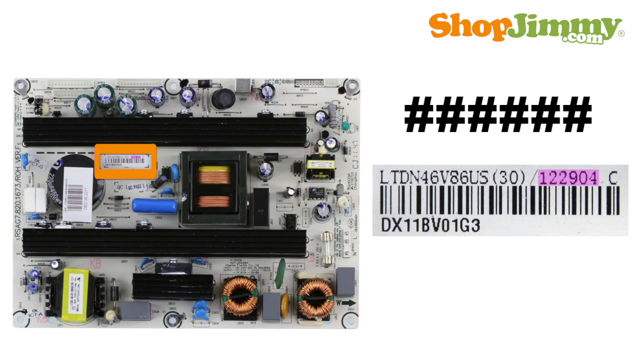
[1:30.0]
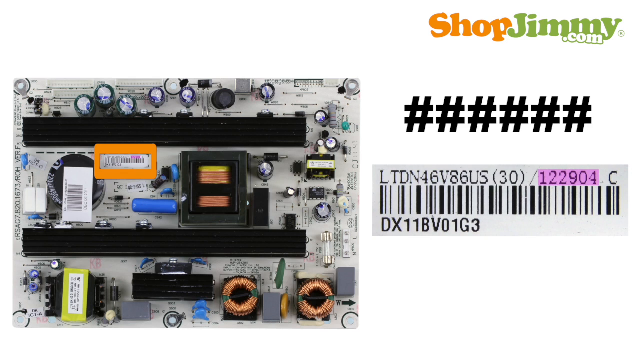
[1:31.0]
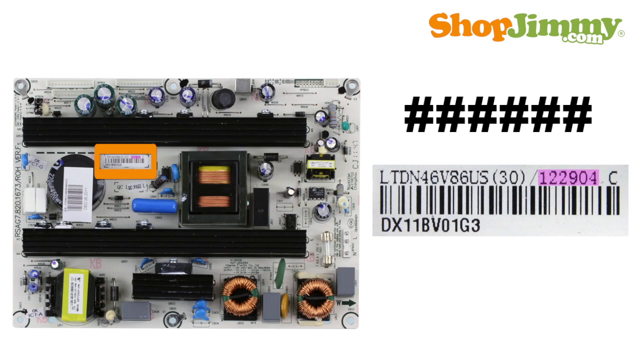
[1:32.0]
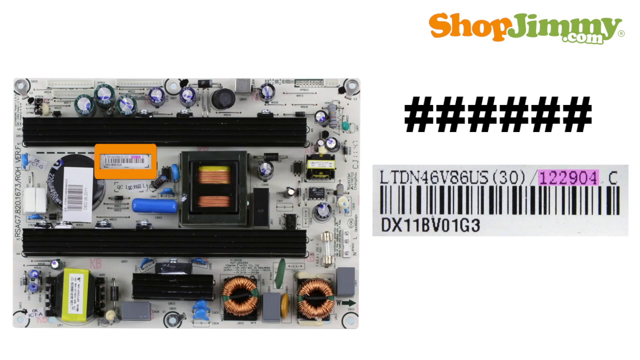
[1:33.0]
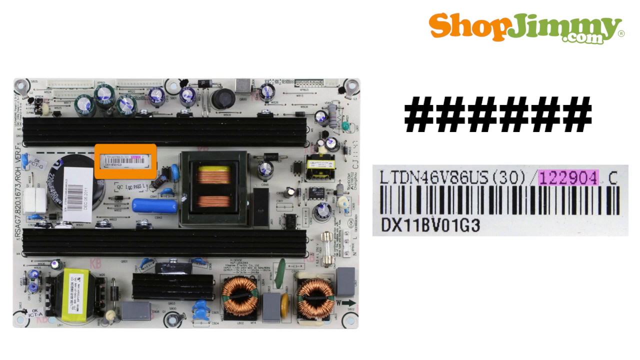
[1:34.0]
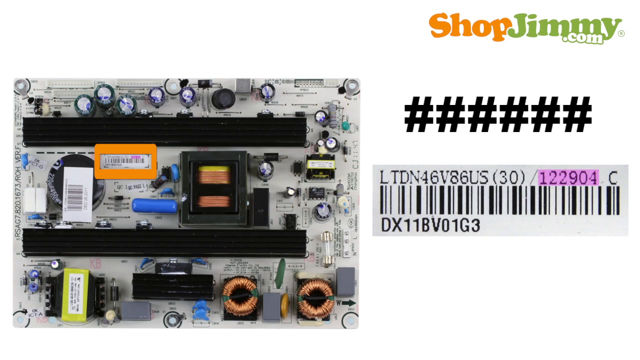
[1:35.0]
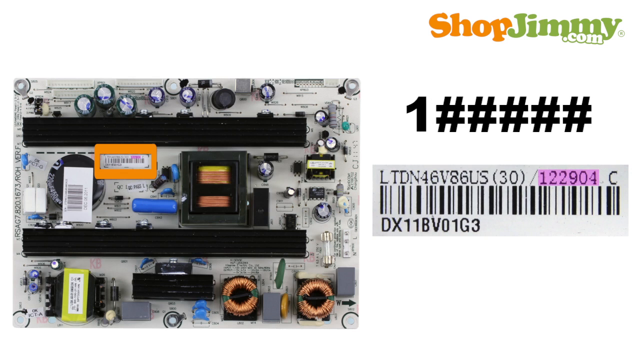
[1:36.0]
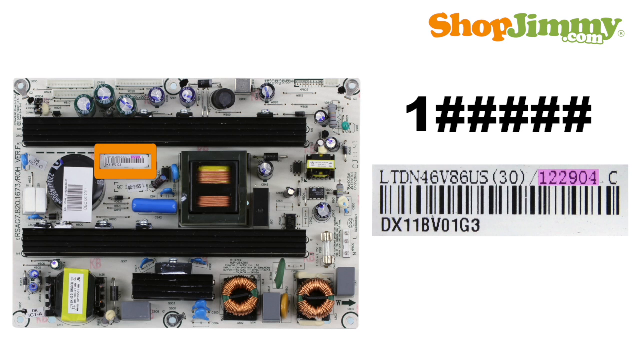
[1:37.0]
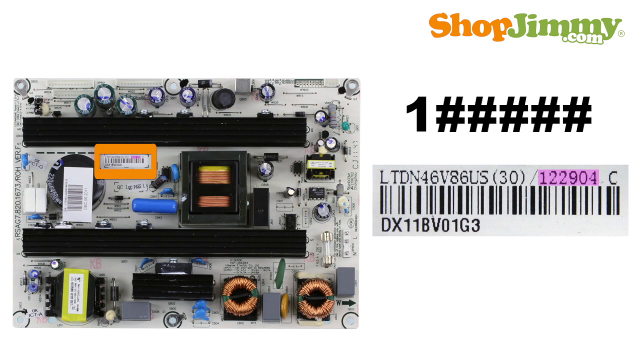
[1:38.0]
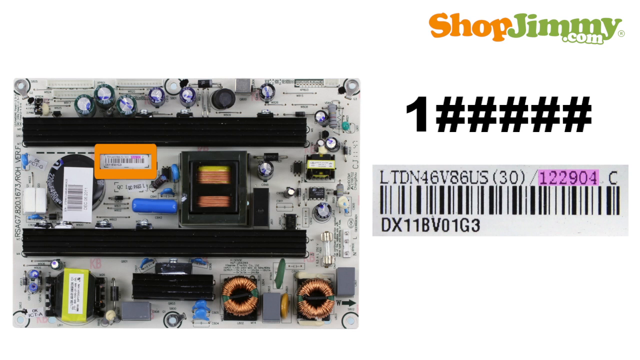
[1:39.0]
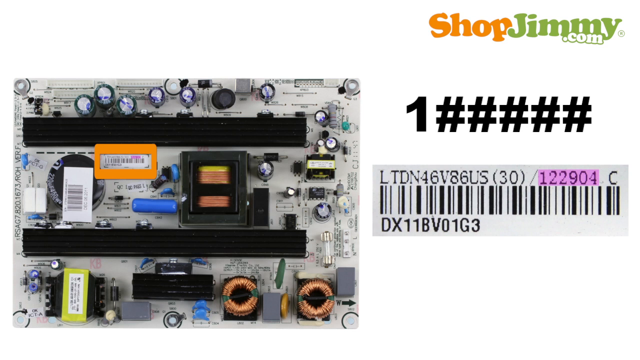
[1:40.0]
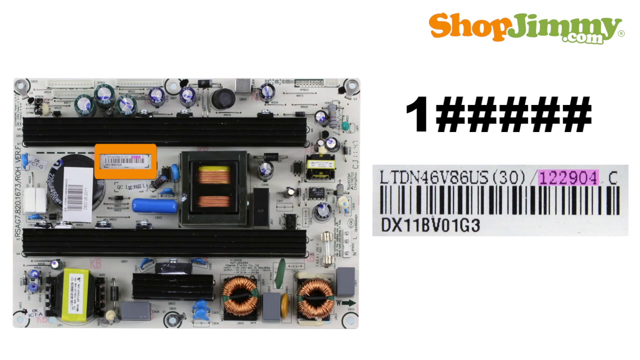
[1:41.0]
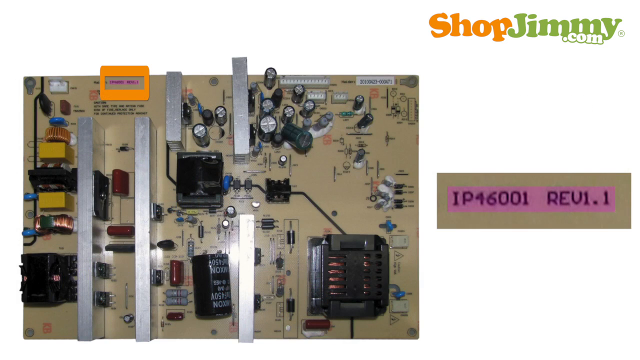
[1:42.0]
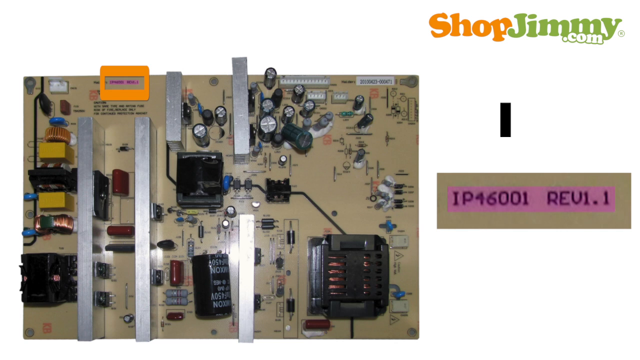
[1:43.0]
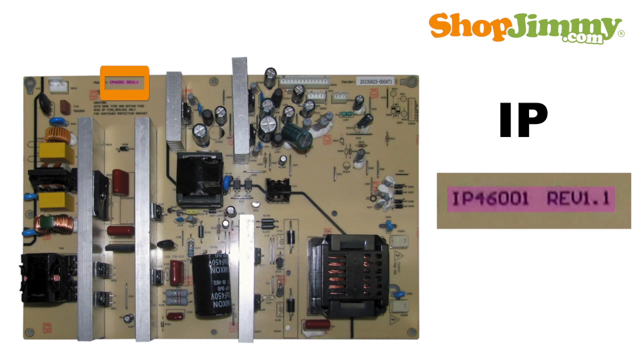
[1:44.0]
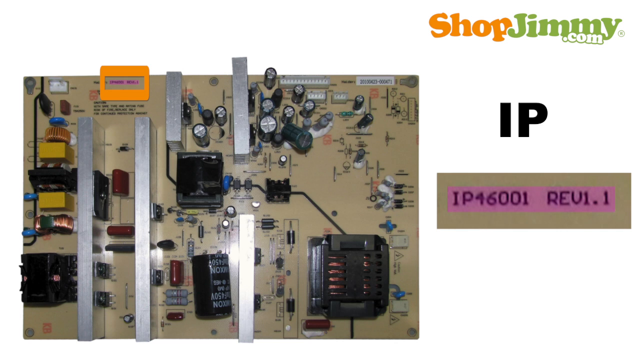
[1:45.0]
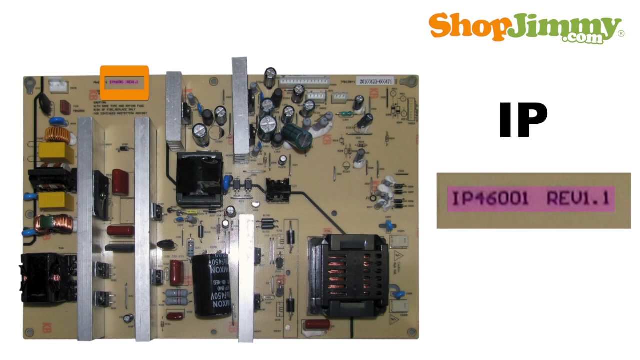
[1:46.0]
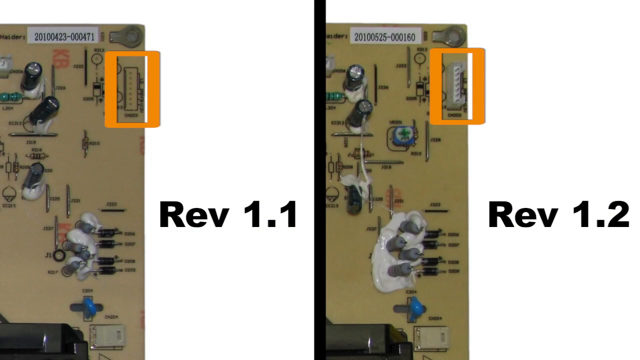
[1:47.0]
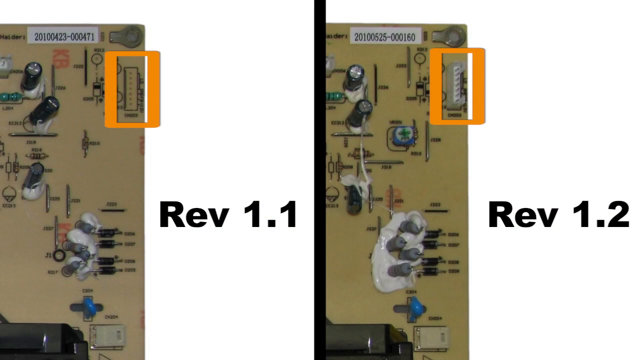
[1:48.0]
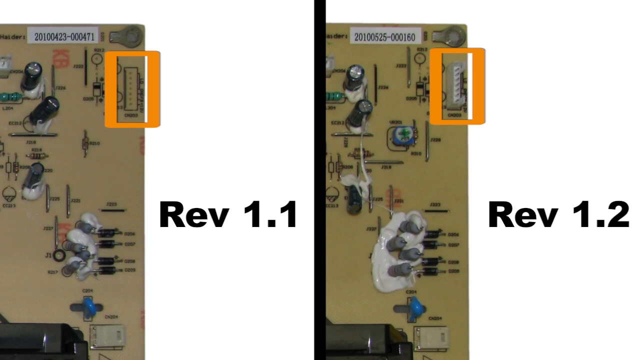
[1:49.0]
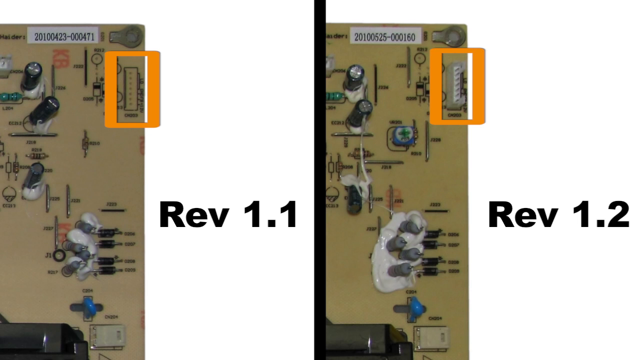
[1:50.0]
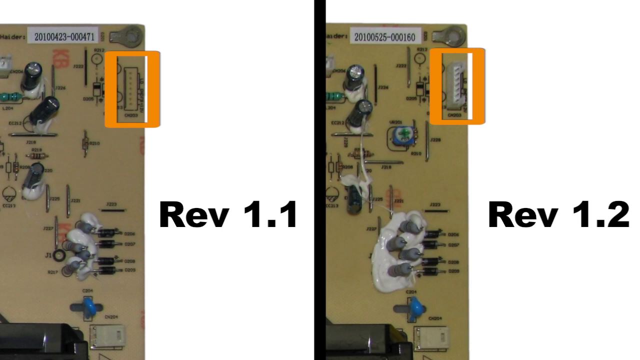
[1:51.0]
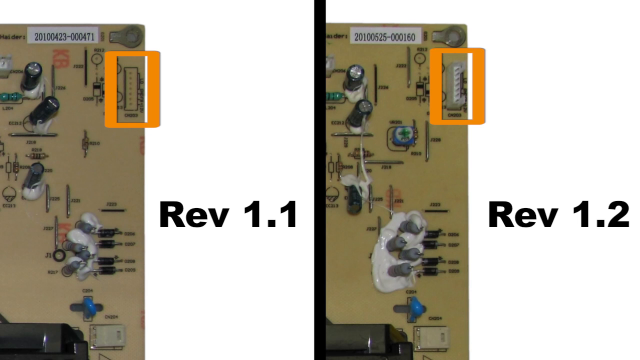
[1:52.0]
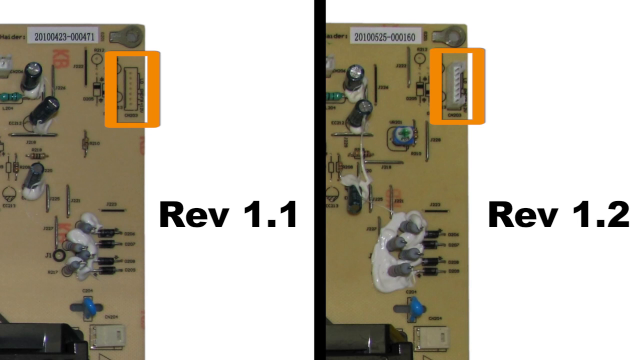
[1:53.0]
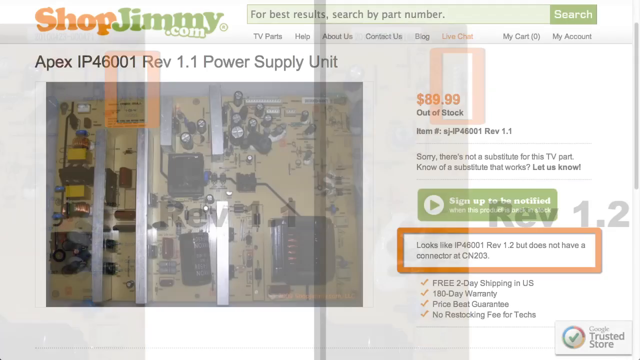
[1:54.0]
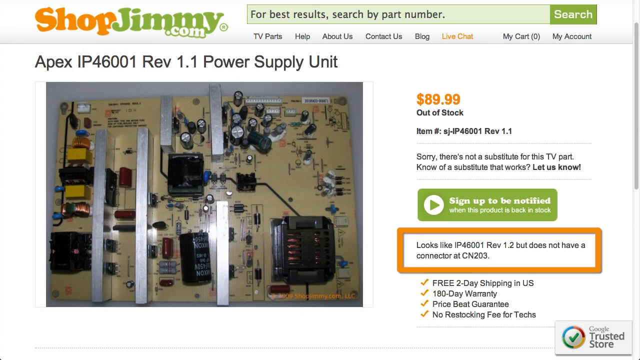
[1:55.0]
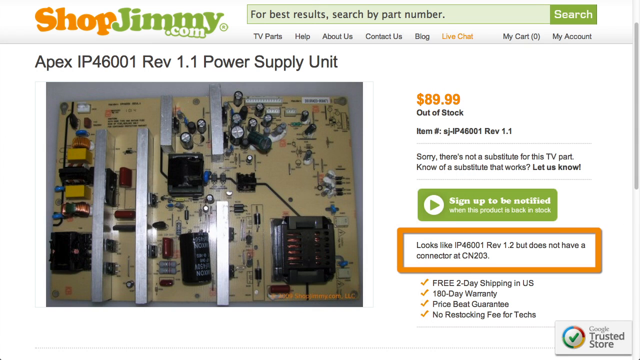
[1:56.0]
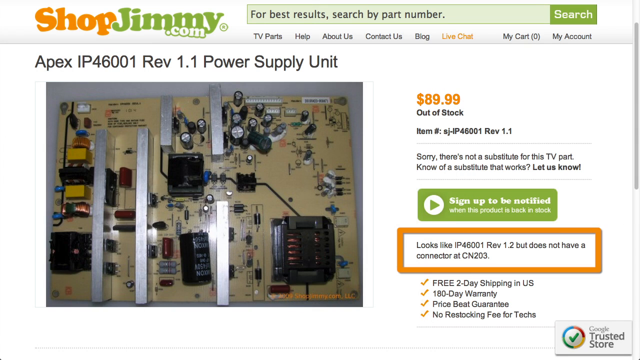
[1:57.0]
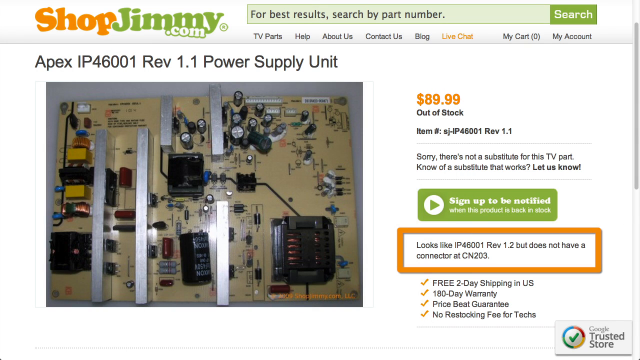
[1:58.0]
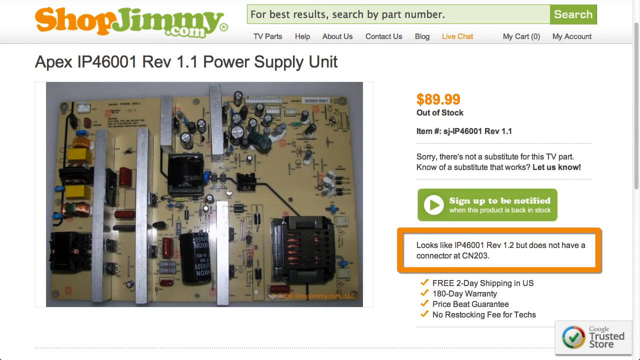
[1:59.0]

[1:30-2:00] A white motherboard from a television is shown with a barcode highlighted in an orange rectangle, whose contents are zoomed in on a separate photo on the right. The black barcode has text on top reading "LTDN46V86US30-122904C" and underneath reading "DX11BV01G3". The video cuts to a yellowish gray board covered with transistors and various plugs, its model number also highlighted in an orange rectangle and shown zoomed in to the right of the board. The zoomed-in image reads "IP 46001 REV 1.1". Then a side-by-side photo shows two versions of the same board, the left labeled "REV 1.1" and the right labeled "REV 1.2". A specific plug is marked with the orange rectangle to show the difference: REV 1.1 has a more built-in, smaller plug, while REV 1.2 has a more pronounced white plug that sticks out of the board.